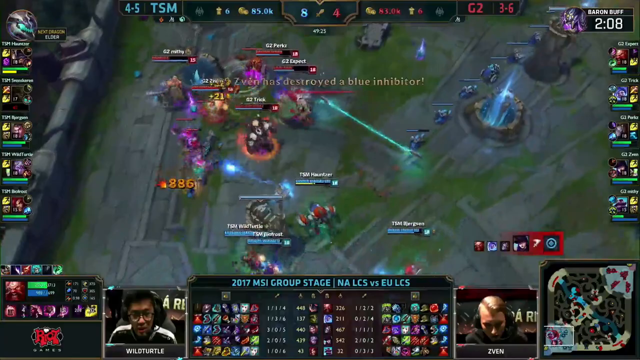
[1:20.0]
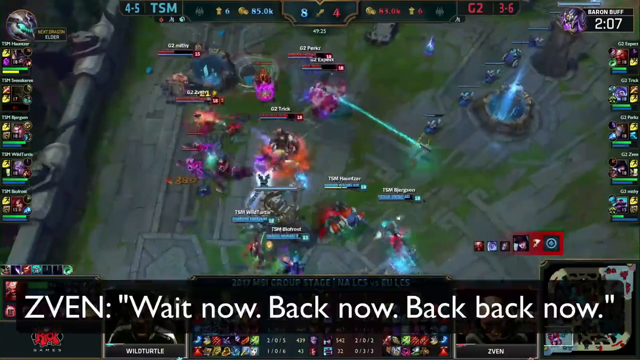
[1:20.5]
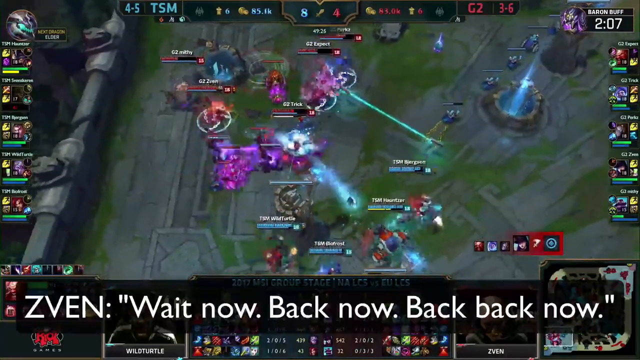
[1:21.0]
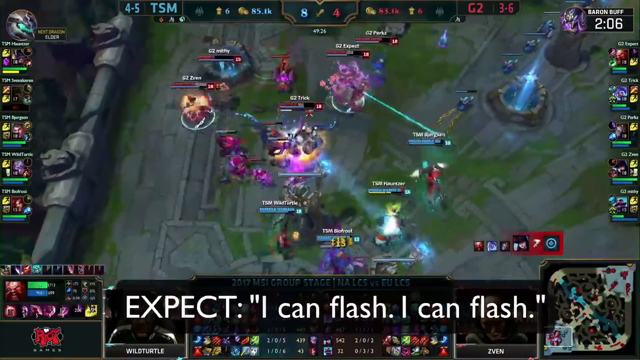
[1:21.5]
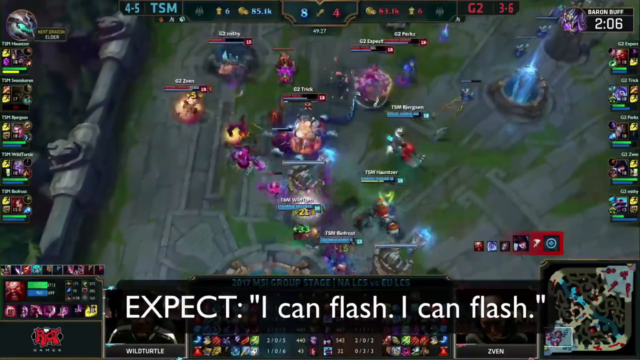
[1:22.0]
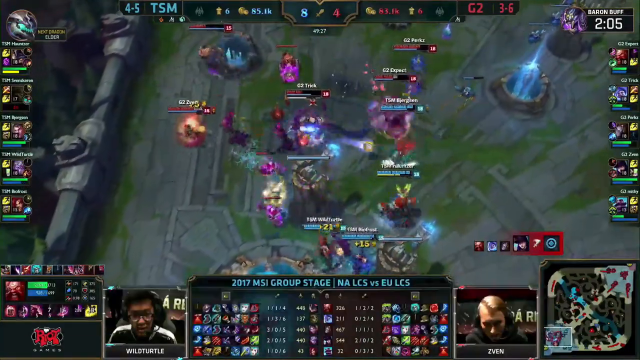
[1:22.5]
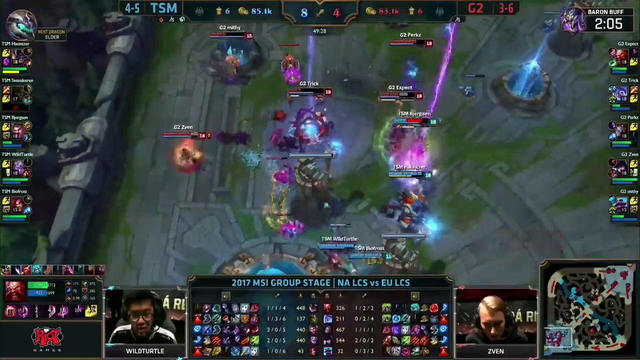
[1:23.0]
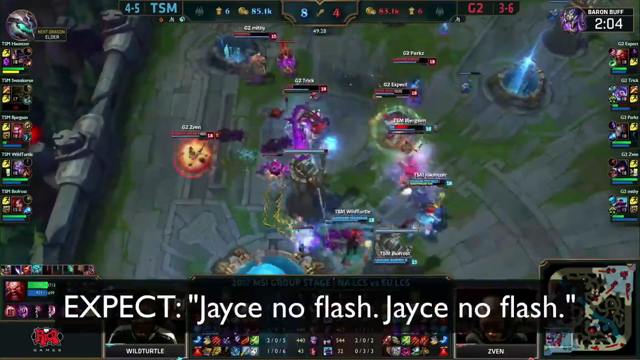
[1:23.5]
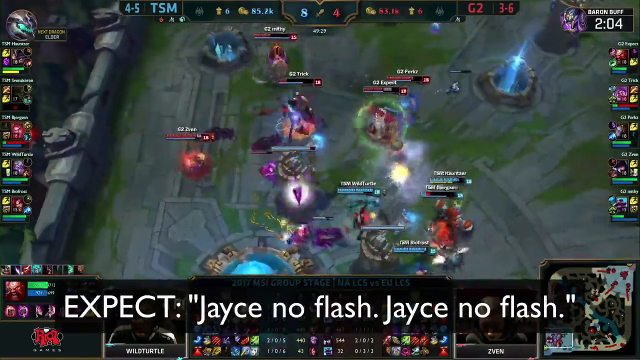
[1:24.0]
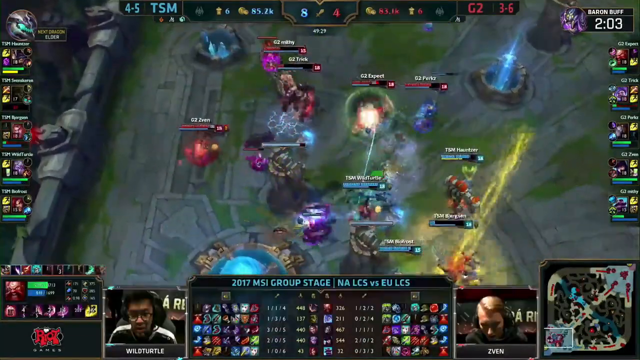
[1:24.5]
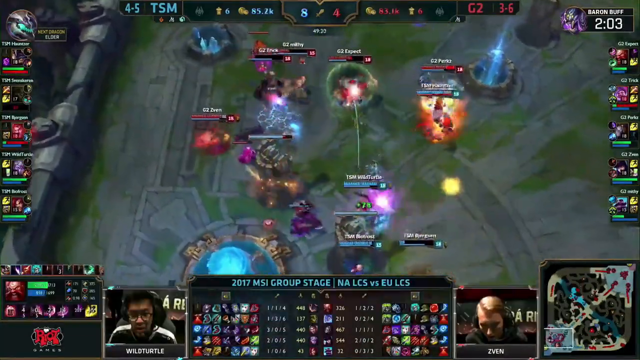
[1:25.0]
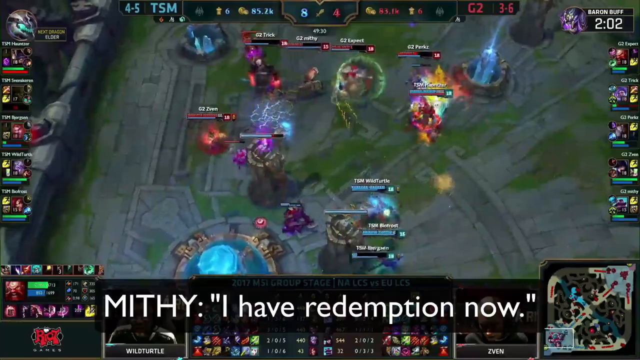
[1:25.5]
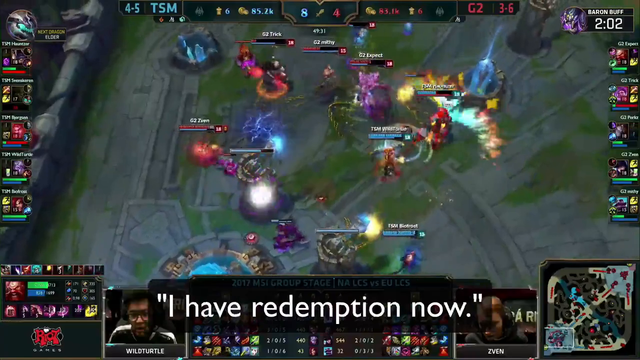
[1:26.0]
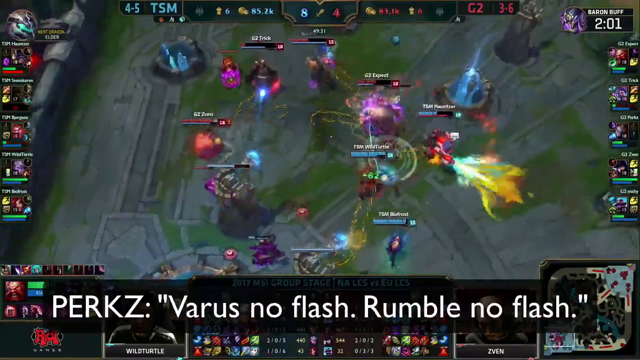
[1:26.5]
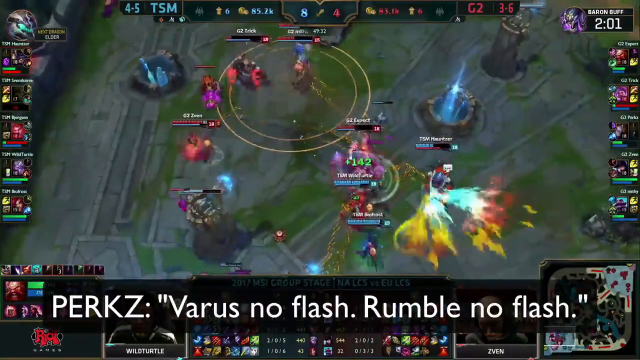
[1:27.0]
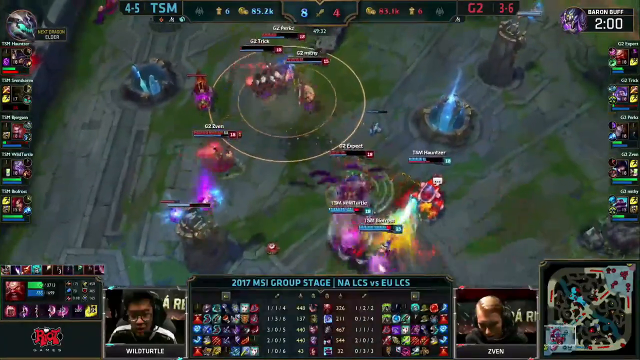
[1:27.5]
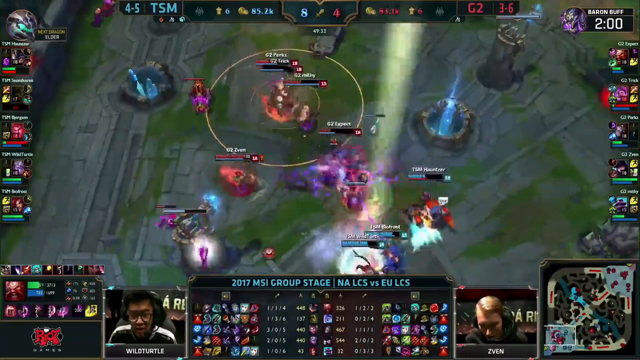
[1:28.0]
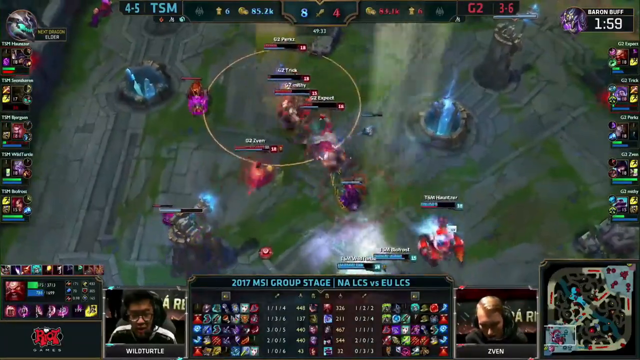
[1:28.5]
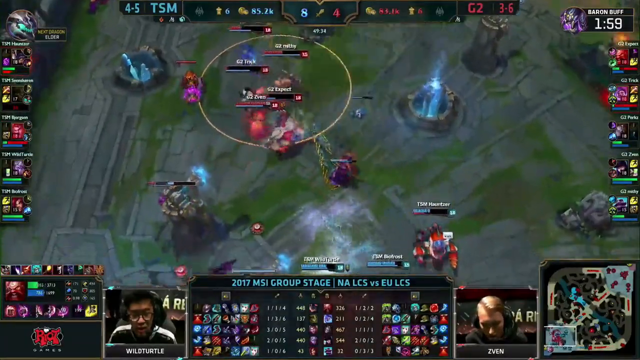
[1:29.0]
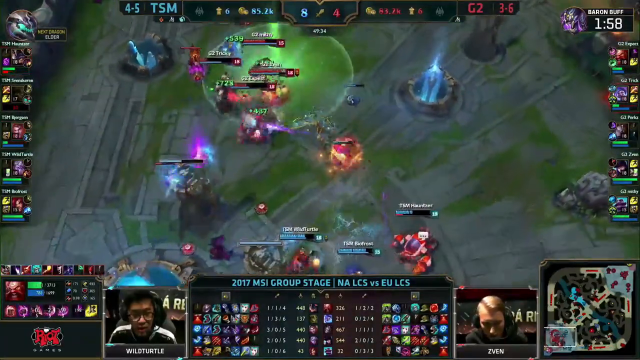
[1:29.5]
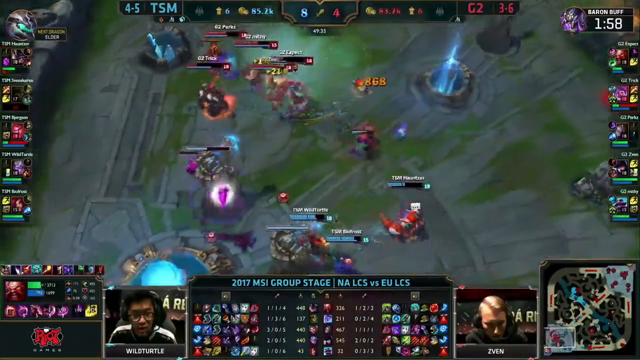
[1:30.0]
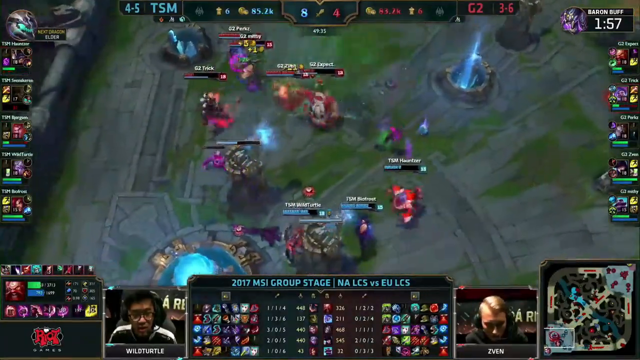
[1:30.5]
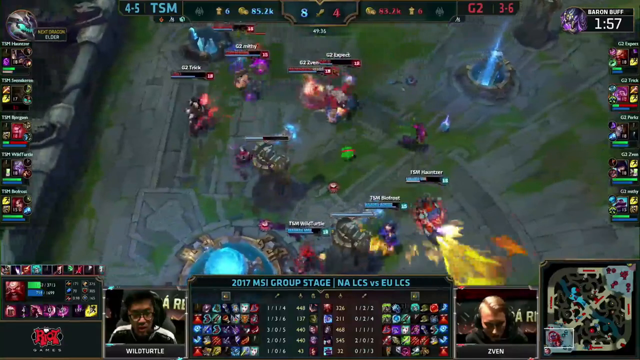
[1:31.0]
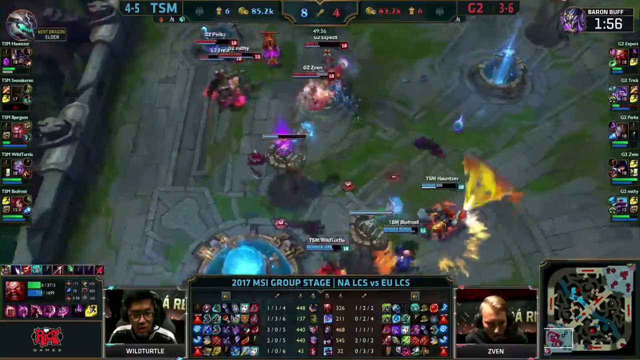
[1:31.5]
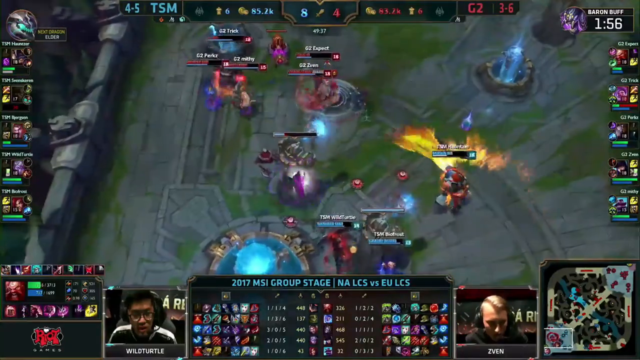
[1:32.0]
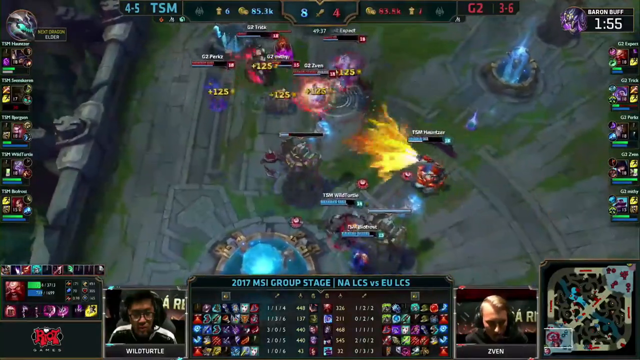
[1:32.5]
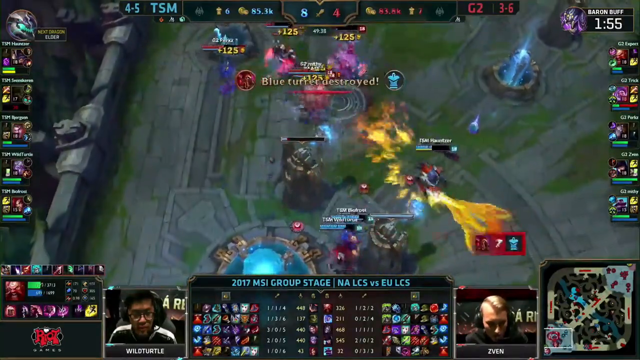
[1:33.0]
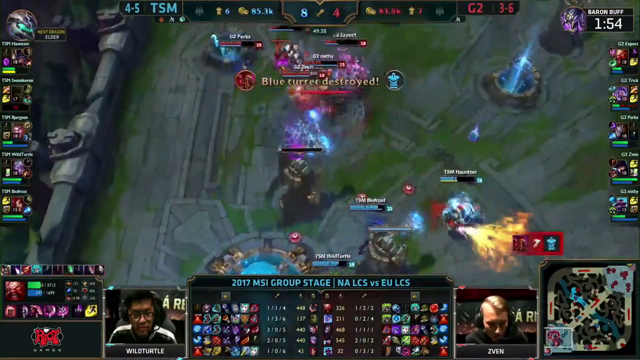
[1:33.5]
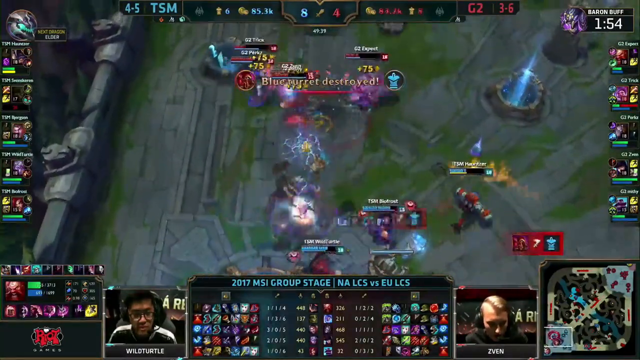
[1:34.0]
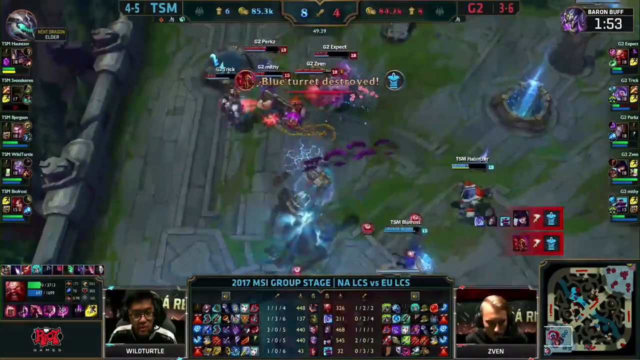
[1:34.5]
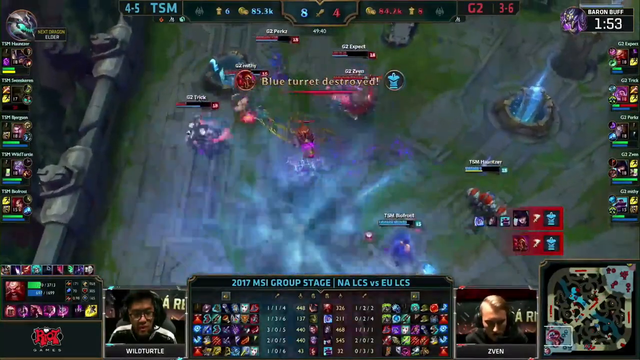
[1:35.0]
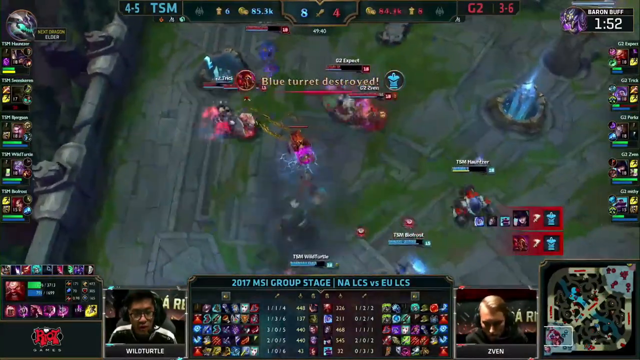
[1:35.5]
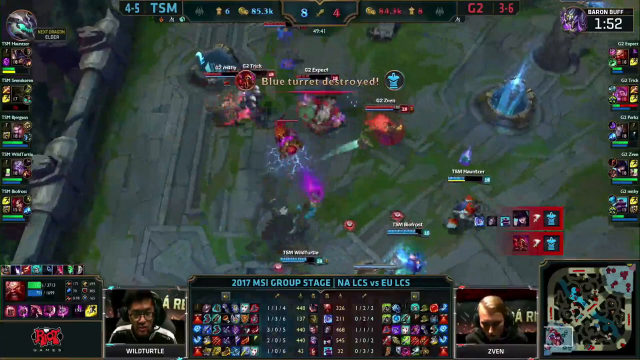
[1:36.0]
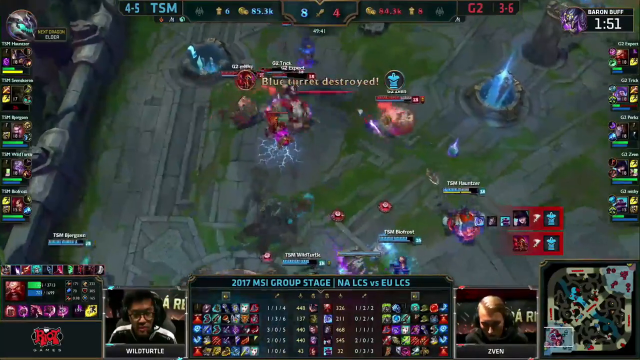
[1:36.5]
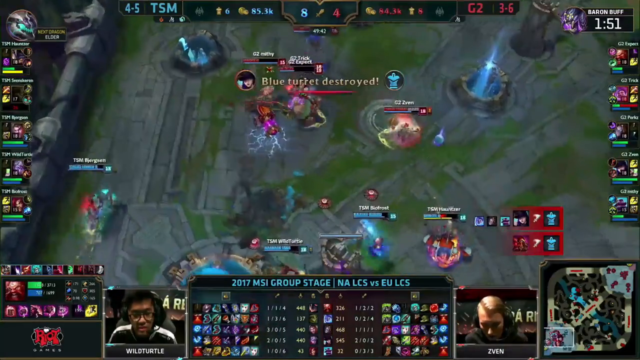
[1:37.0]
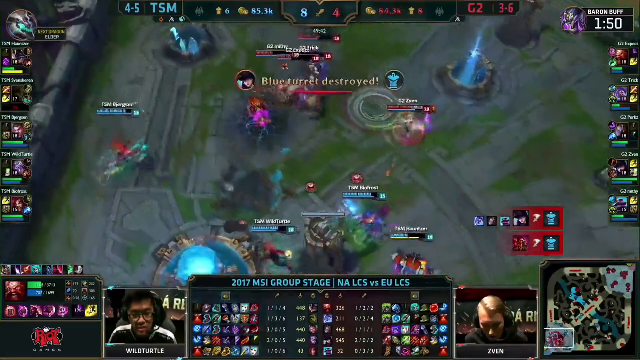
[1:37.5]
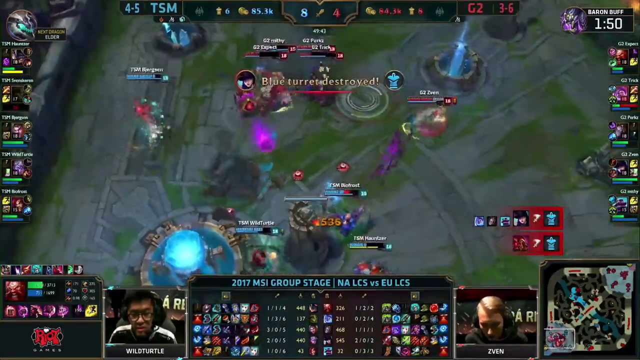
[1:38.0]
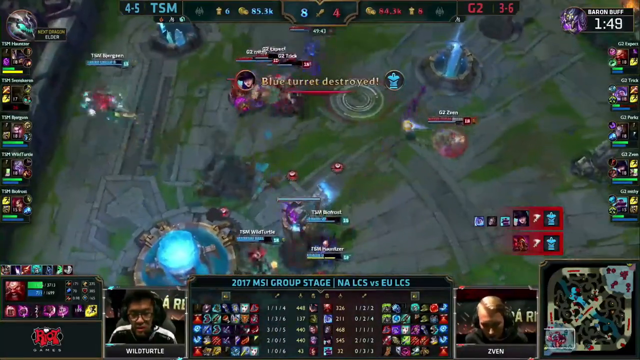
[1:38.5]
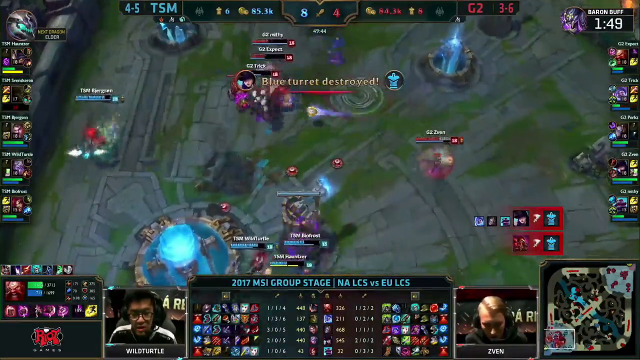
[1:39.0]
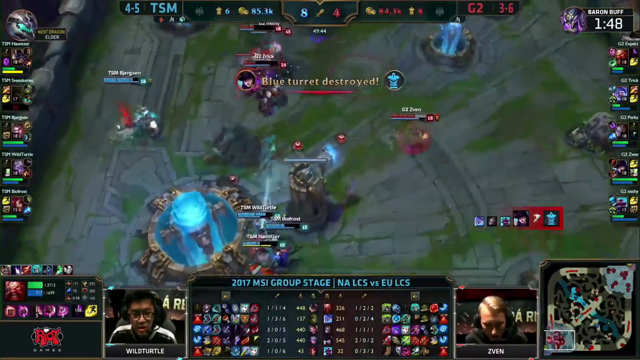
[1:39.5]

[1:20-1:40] More white subtitle text on a black background appears at the bottom: expect says "I can flash, I can flash"; expect says "Jace, no flash. Jace, no flash"; Mithy says "I have redemption now"; Perks says "can we hit now?"; Devon says "wait now, back now, back now." The words "various calls" appear in italics. WildTurtle, on the left, looks more stressed, with his head up, looking almost shellshocked. Zven, on the right, still has his head tilted down, concentrating intensely on his screen. The two teams battle amid lots of multicolored spell effects.